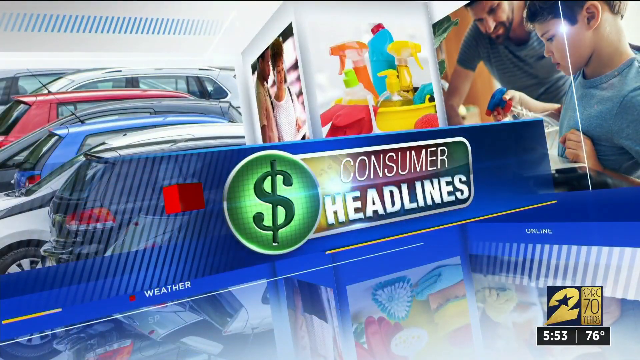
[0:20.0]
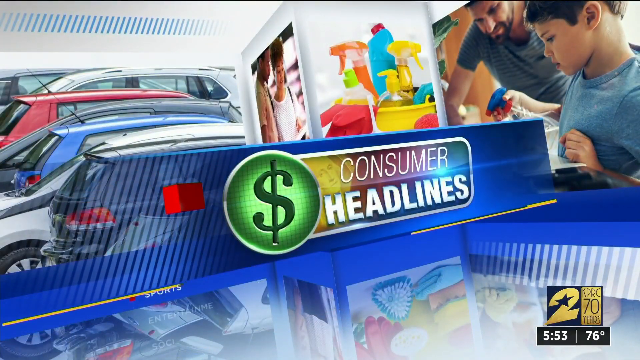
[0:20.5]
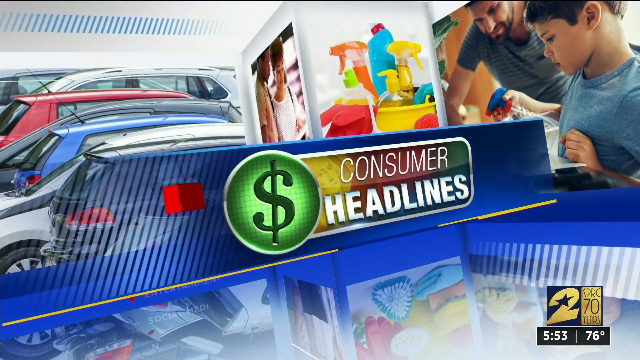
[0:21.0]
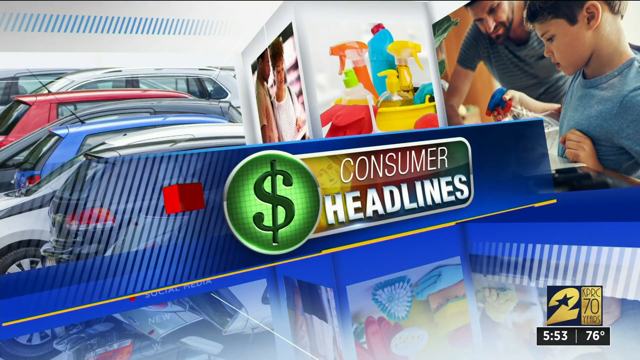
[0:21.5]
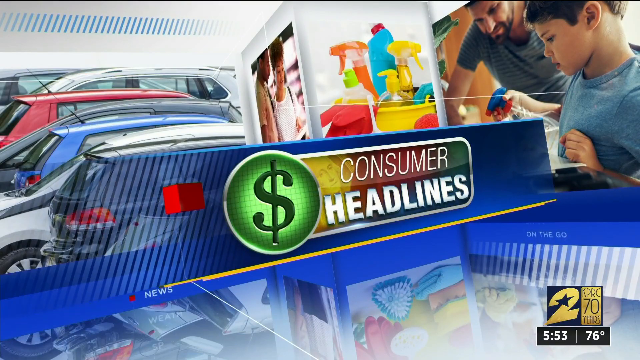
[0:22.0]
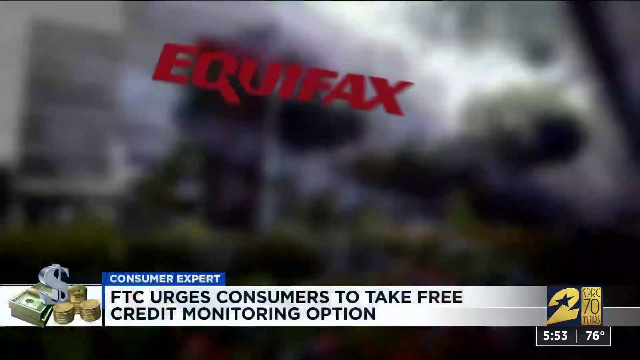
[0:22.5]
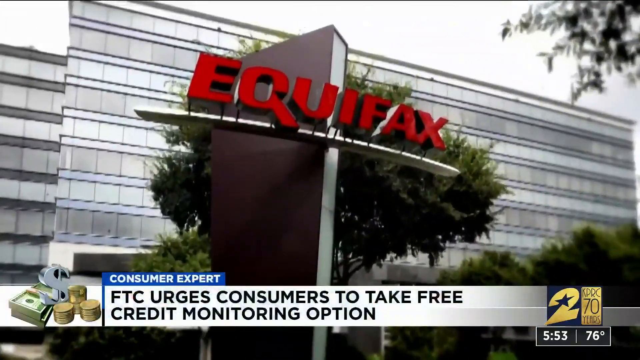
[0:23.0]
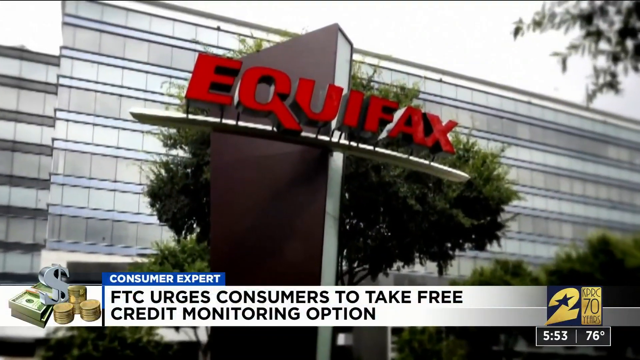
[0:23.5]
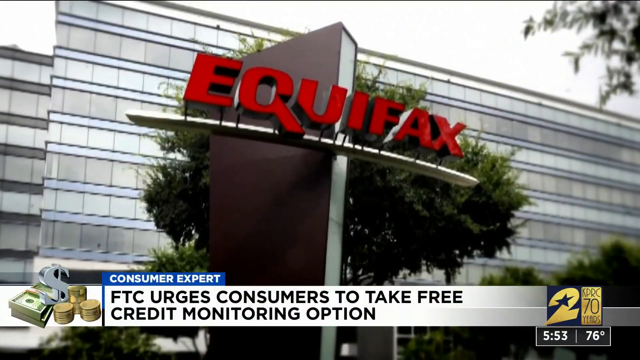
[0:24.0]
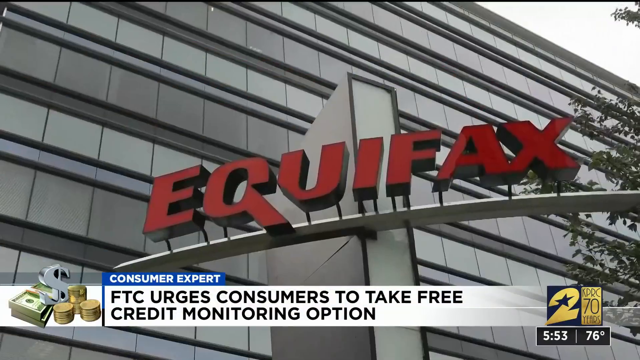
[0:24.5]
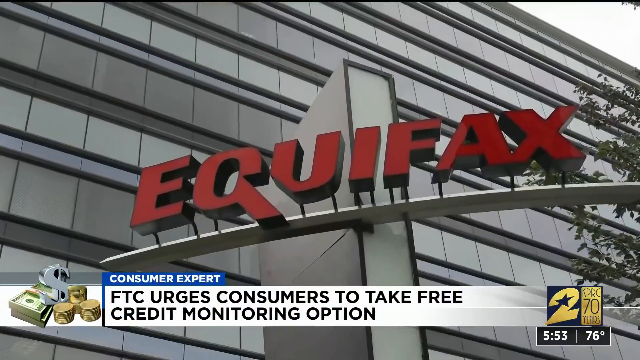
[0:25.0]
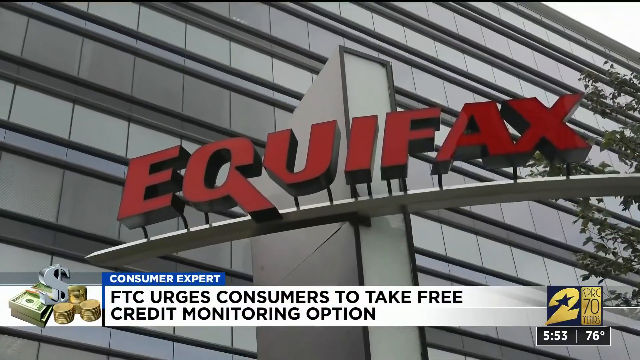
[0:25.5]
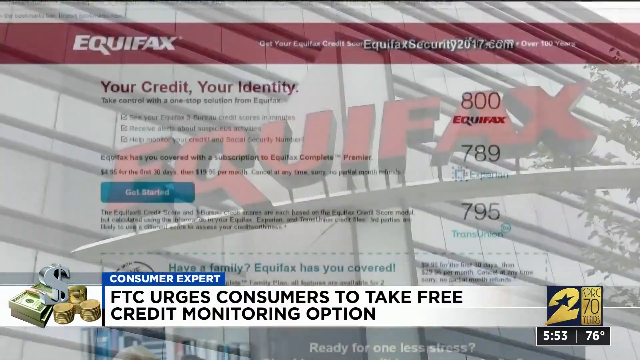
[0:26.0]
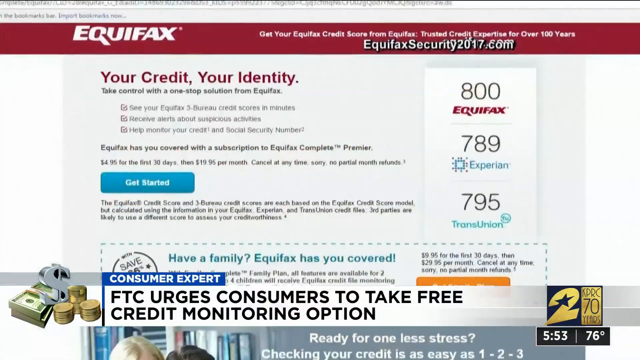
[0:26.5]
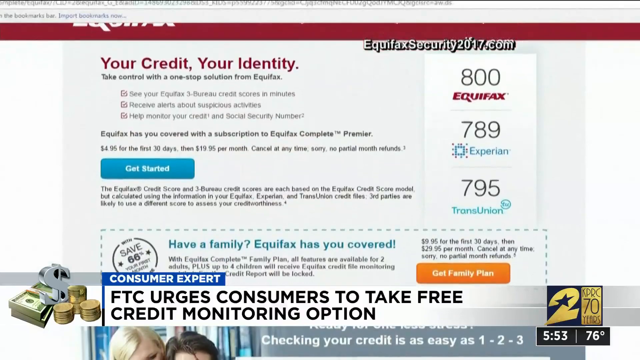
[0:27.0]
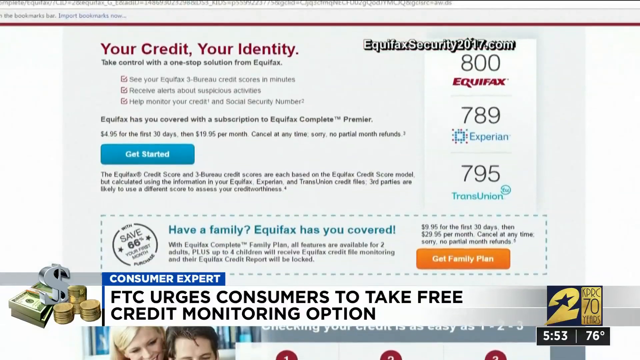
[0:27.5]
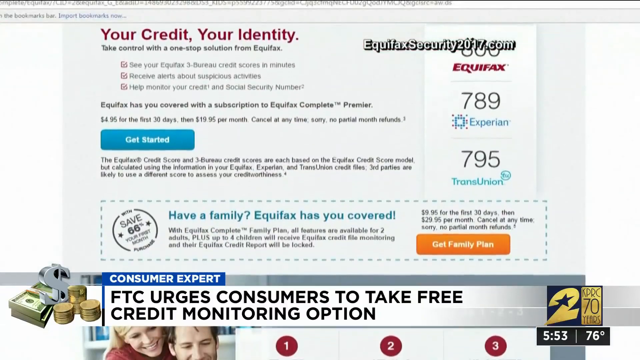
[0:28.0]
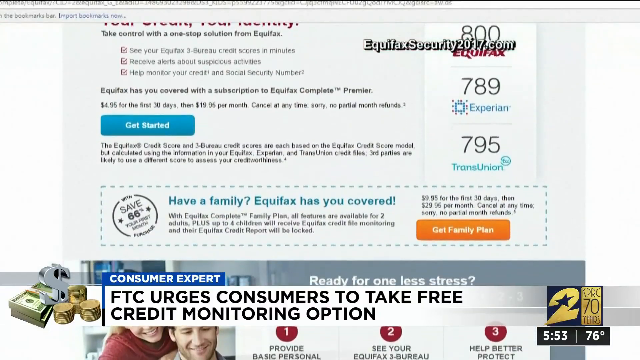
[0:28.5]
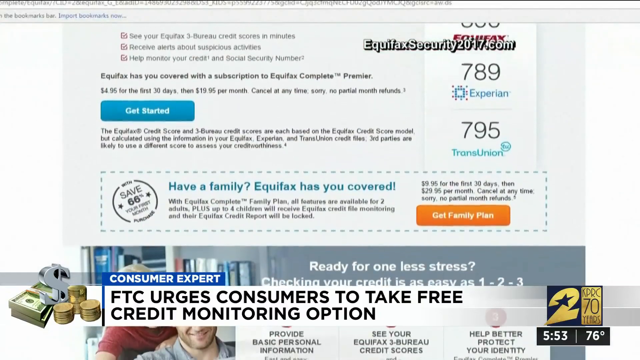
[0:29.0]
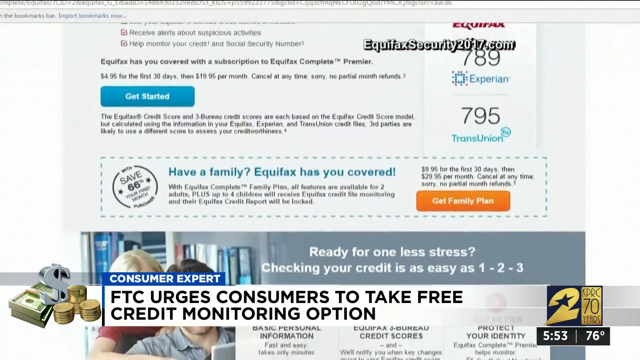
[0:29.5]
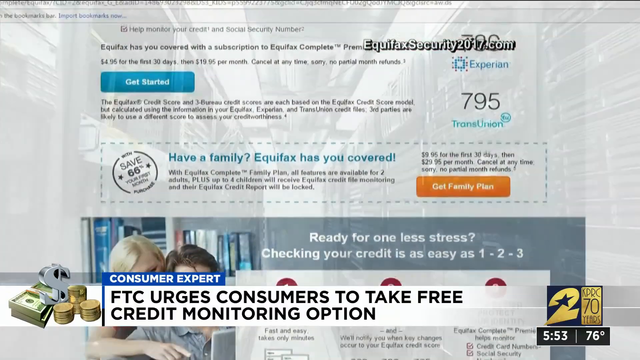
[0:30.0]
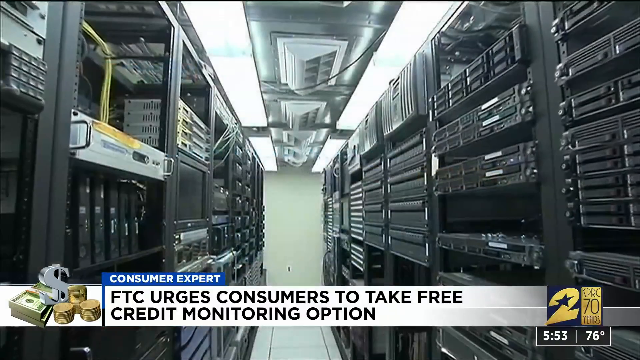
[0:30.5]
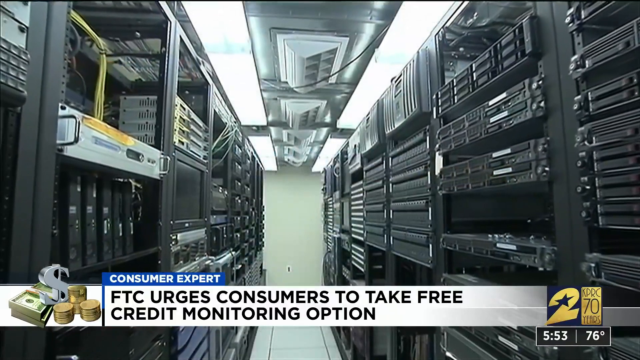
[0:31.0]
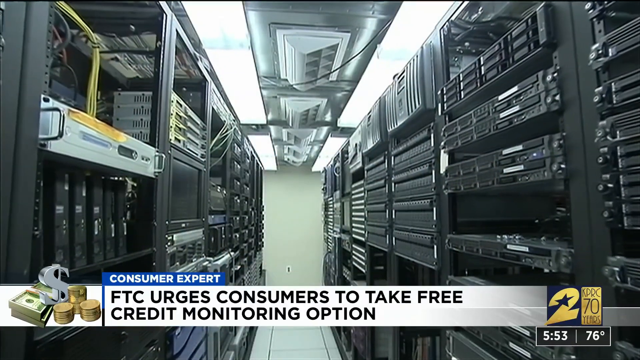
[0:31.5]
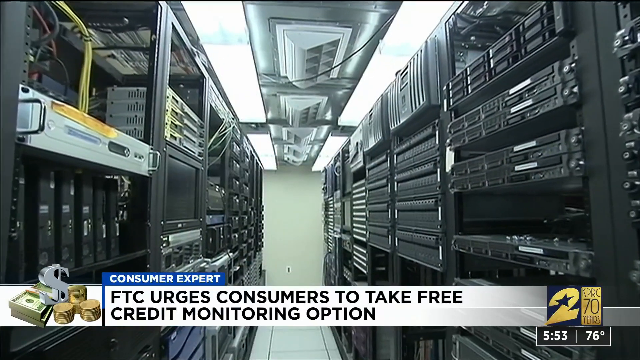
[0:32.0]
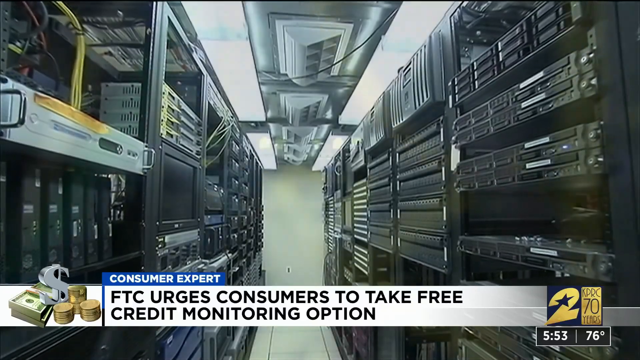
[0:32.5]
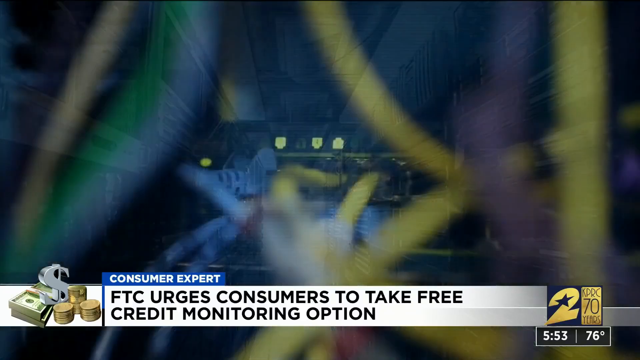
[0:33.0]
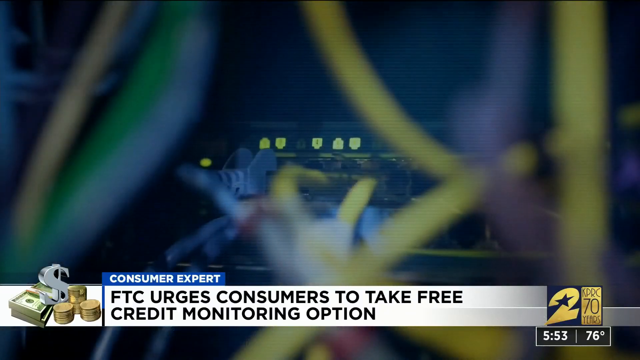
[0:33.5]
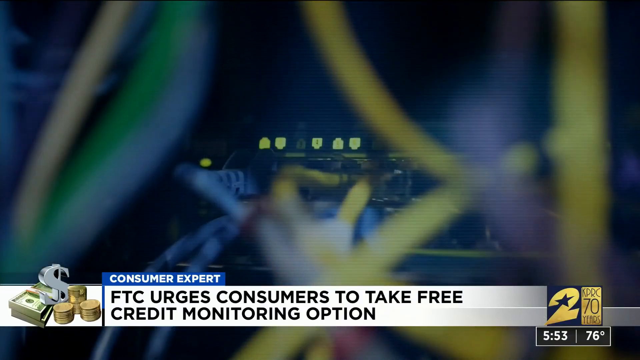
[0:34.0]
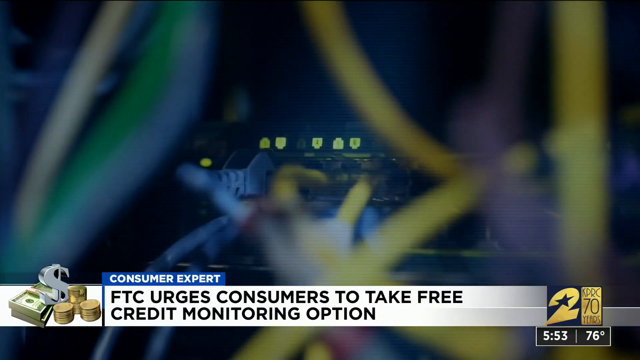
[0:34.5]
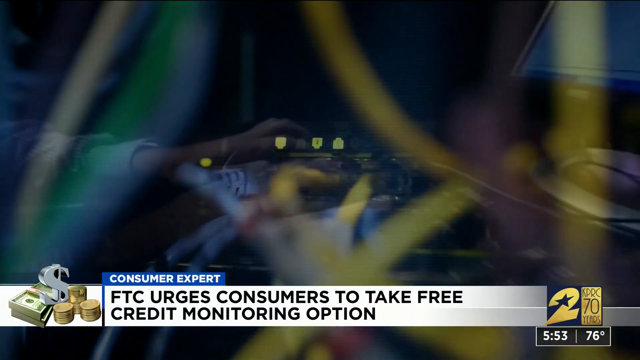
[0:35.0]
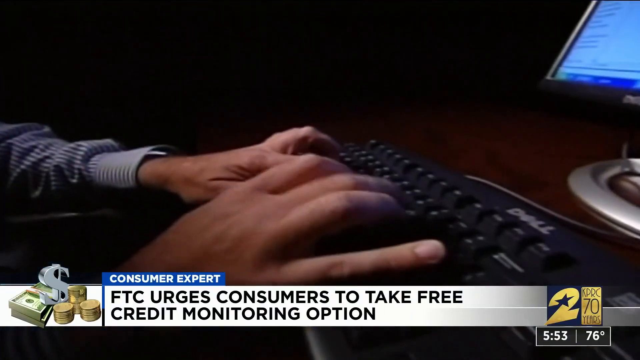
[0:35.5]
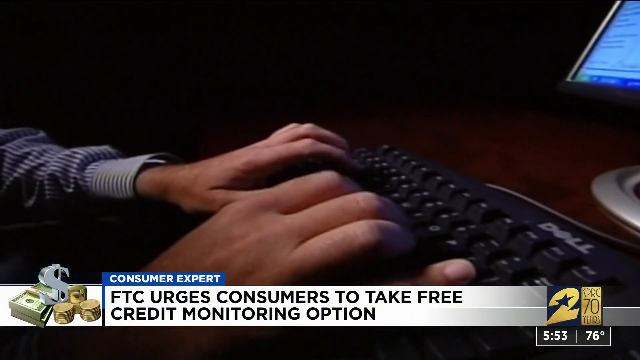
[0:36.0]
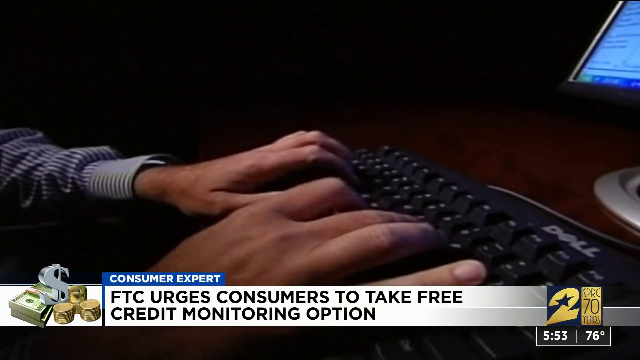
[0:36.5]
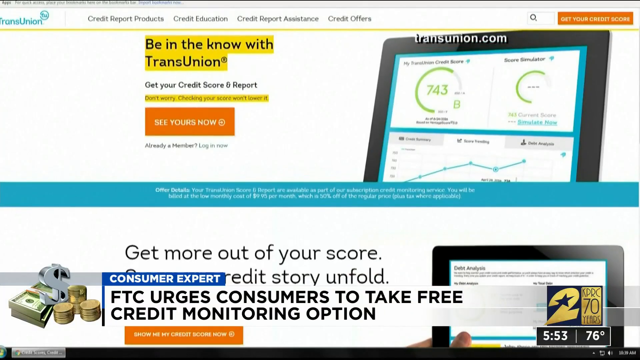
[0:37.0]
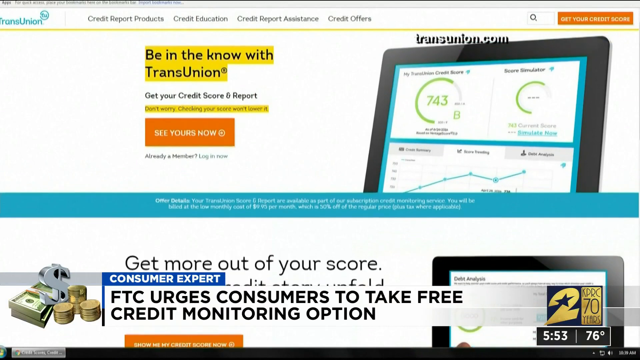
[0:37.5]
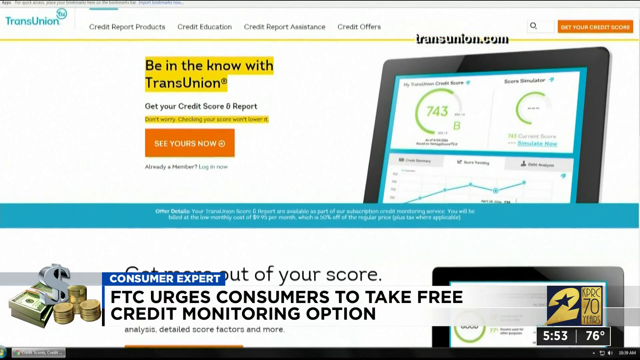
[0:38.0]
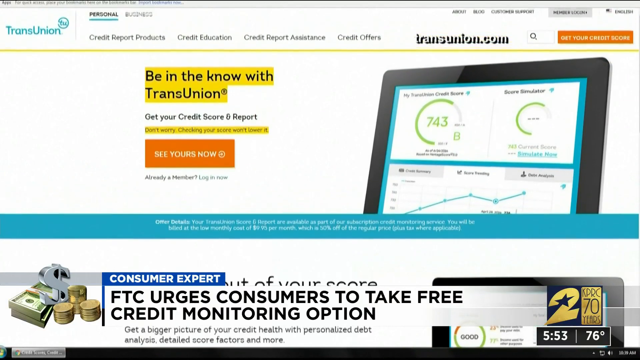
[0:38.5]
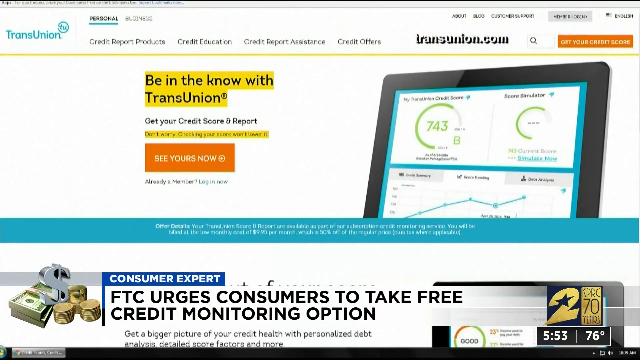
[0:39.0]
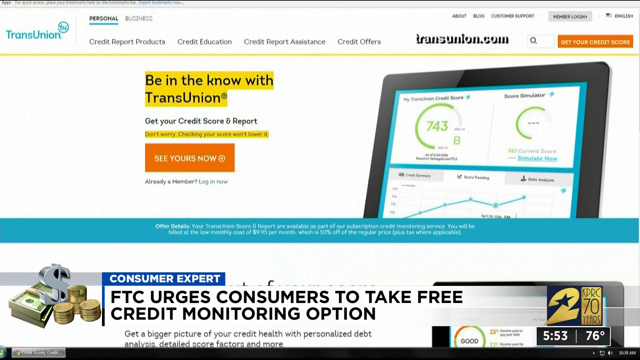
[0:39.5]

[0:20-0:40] A blue rectangular box reads "consumer headlines", with an icon of a green circle with a money sign next to it. Behind it is a collage of images: on the left, cars parked in a parking lot; next to that, a small image of a woman and man apparently at a store looking down at a product; to the right of that, cleaning products; and to the right of that, a man and his young son cleaning, the son holding what looks like a spray bottle. Then what looks to be the exterior of the Equifax building appears, a large rectangular, silver-looking building with lots of windows going across. At the bottom of the screen is a white rectangular box with a blue label at the top reading "consumer expert", and black text in the white box reading "FTC urges consumers to take free credit monitoring option". The view kind of zooms in a few times on the Equifax sign, big red capital letters reading "Equifax" on the side of the building. Next, what looks to be the Equifax website appears in a browser, with the user scrolling down the page. A video follows of what looks like a large room with lots of servers of some sort, with long aisles covered with black server-like machines. Then there is a close-up of some kind of small black machine with glowing yellow lights and a bunch of yellow and gray plugs plugged into the back of it, followed by a close-up of a pair of hands typing on a black keyboard, which changes to the TransUnion website.